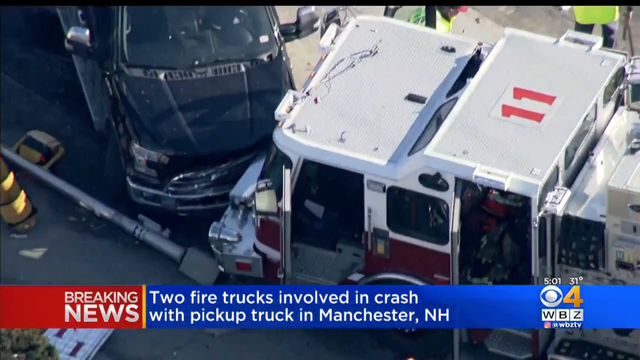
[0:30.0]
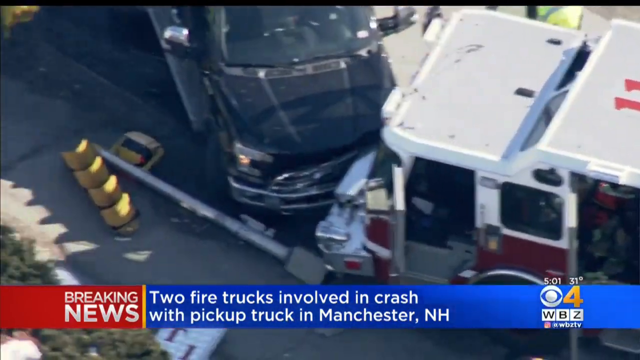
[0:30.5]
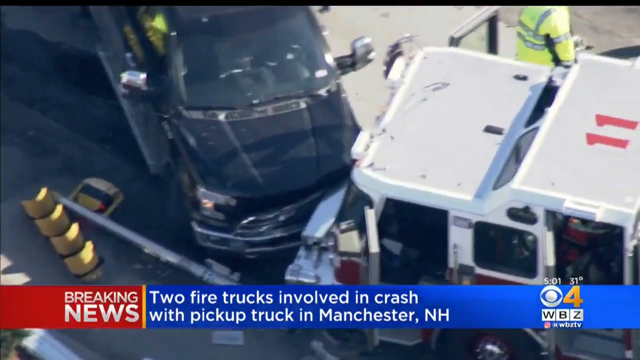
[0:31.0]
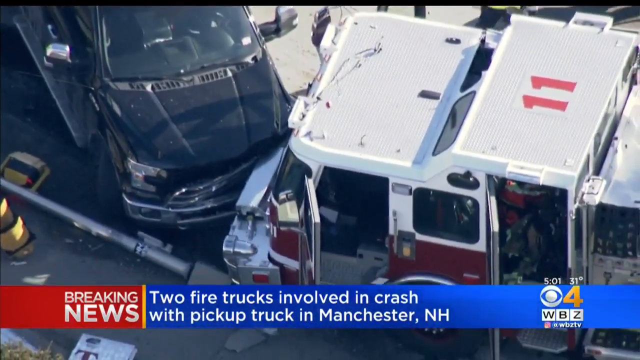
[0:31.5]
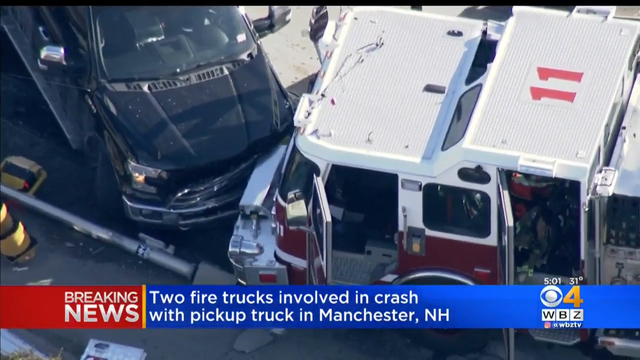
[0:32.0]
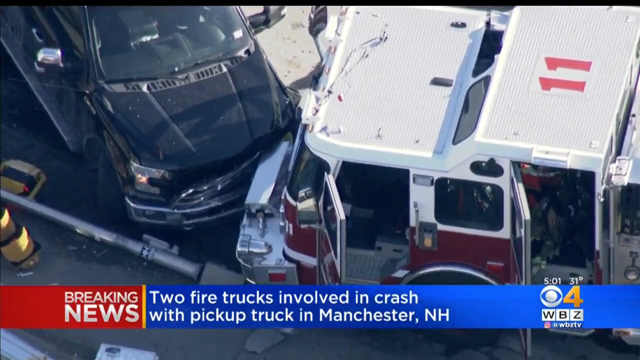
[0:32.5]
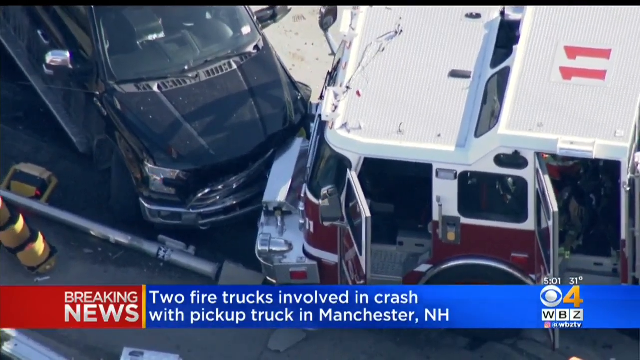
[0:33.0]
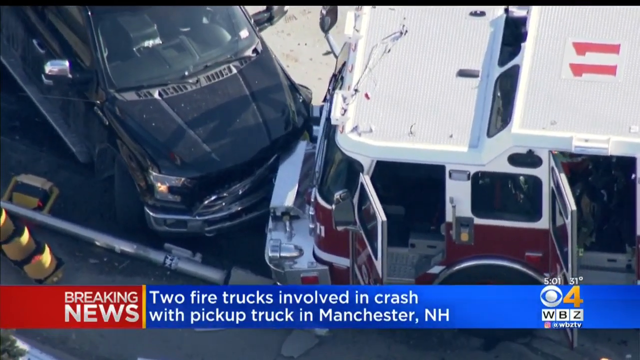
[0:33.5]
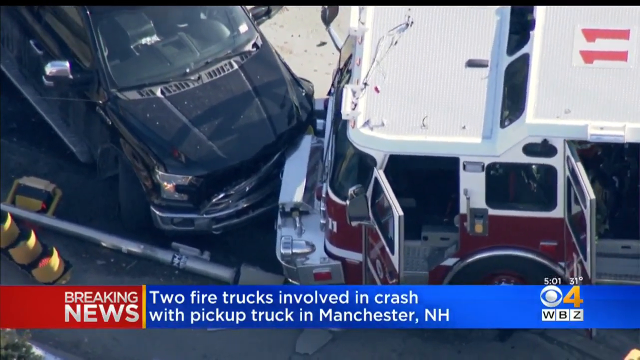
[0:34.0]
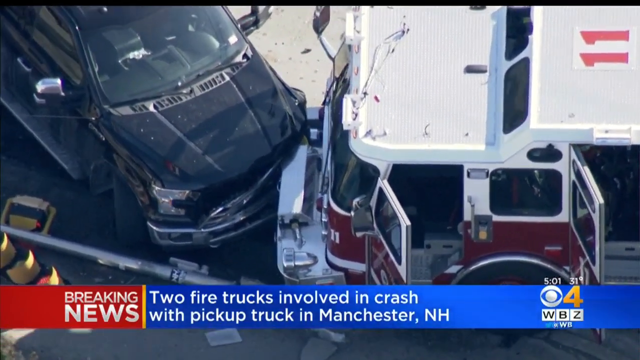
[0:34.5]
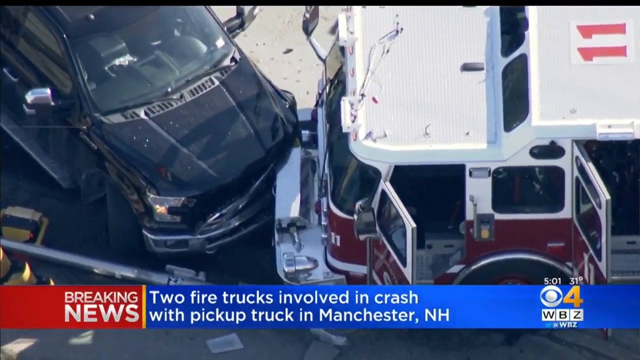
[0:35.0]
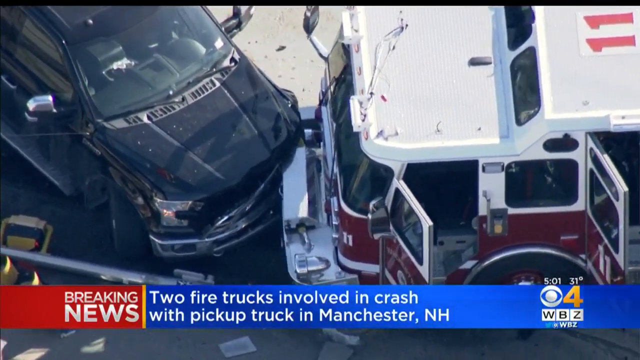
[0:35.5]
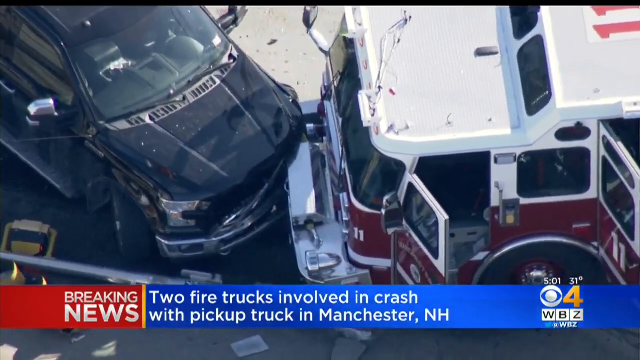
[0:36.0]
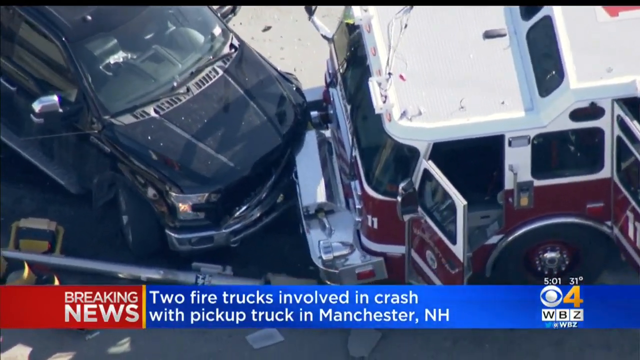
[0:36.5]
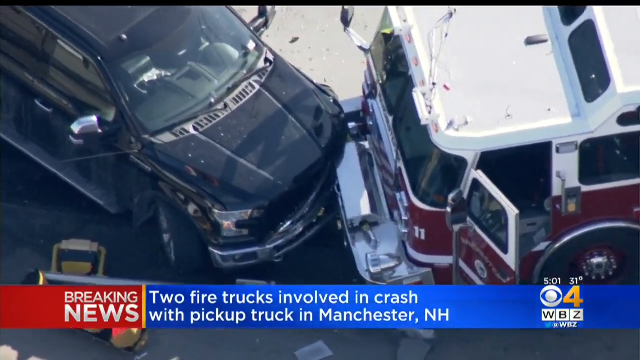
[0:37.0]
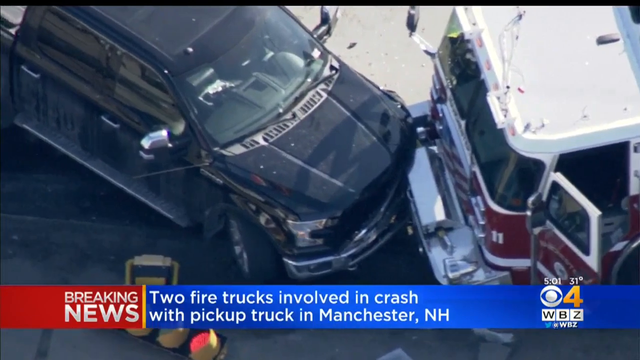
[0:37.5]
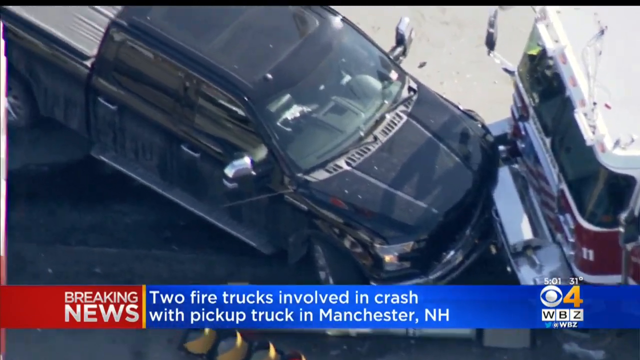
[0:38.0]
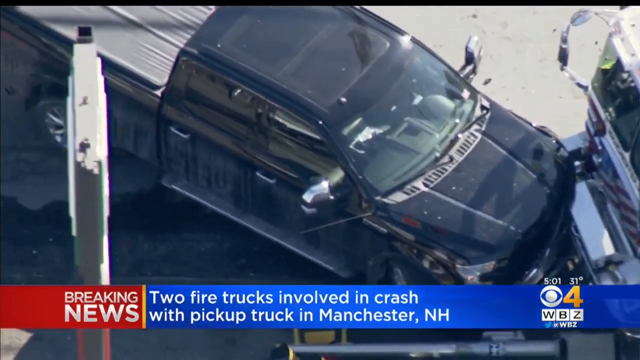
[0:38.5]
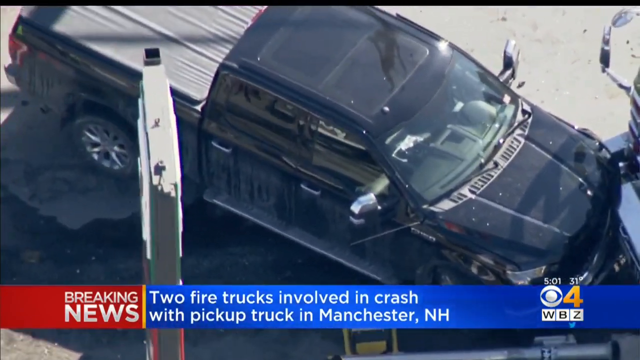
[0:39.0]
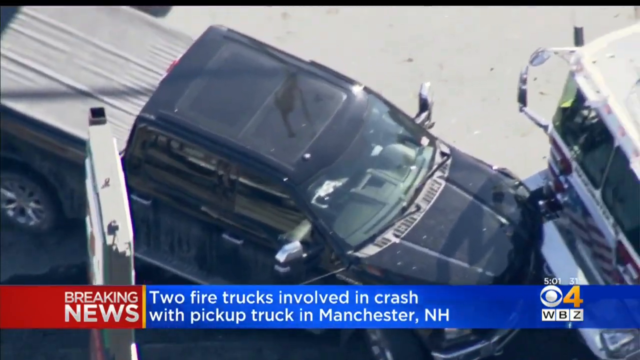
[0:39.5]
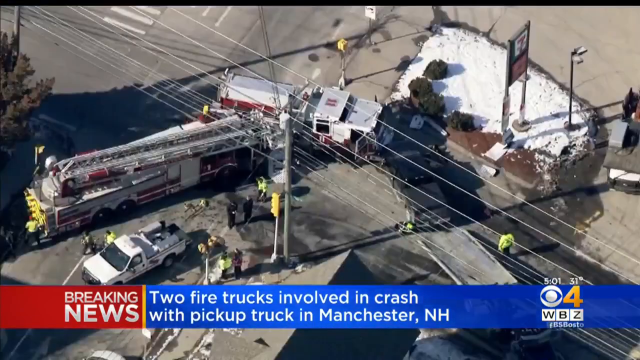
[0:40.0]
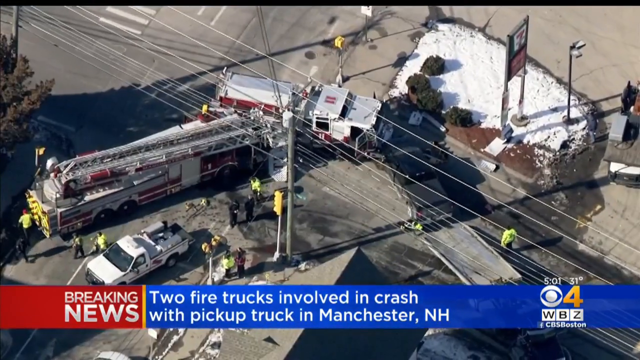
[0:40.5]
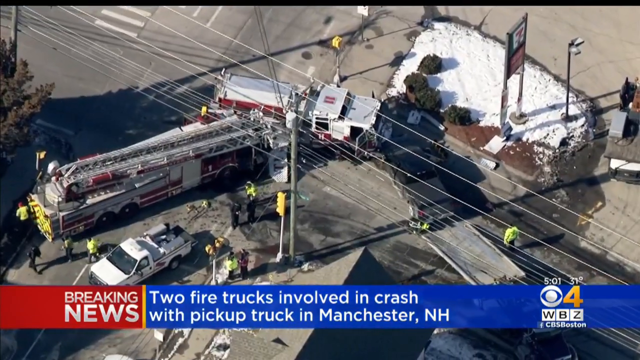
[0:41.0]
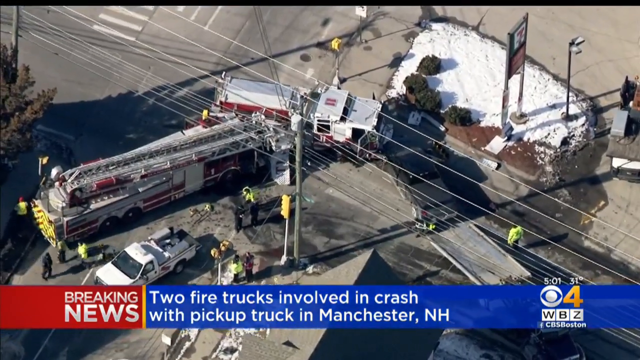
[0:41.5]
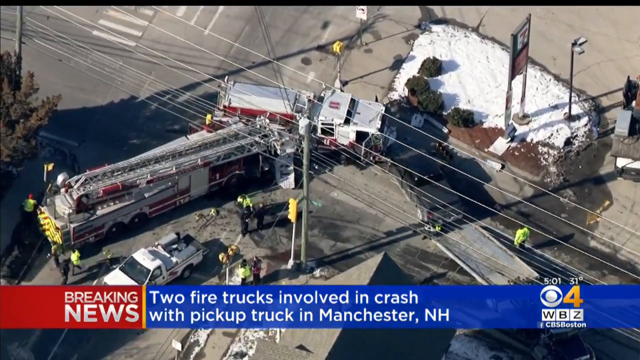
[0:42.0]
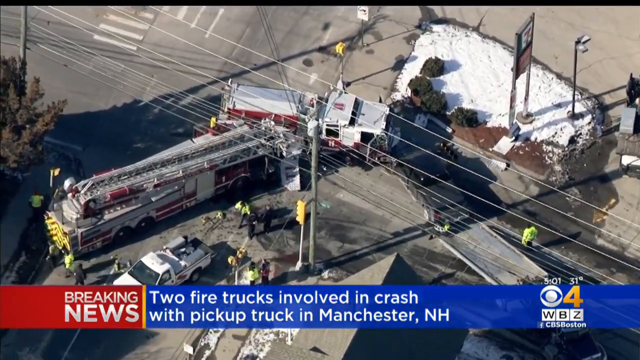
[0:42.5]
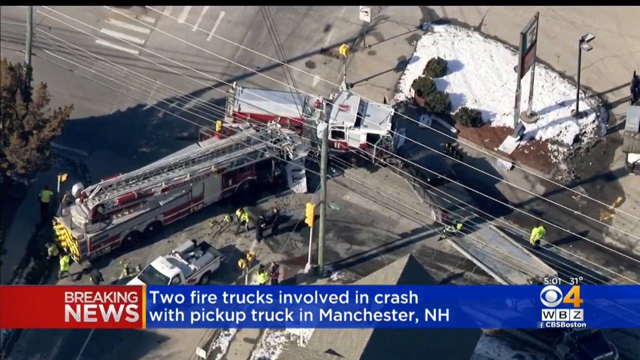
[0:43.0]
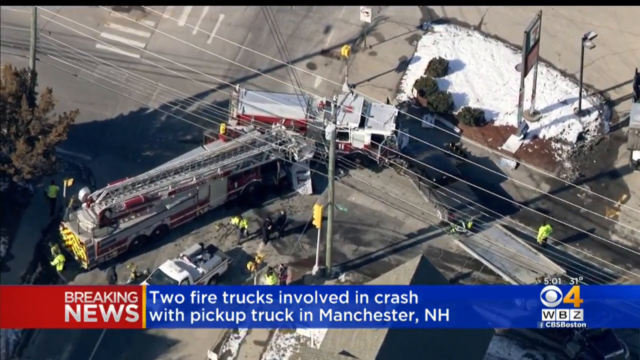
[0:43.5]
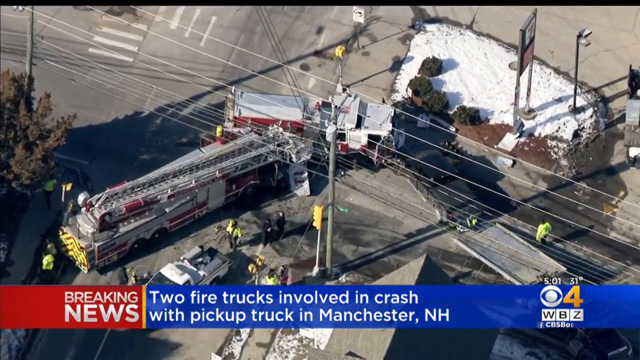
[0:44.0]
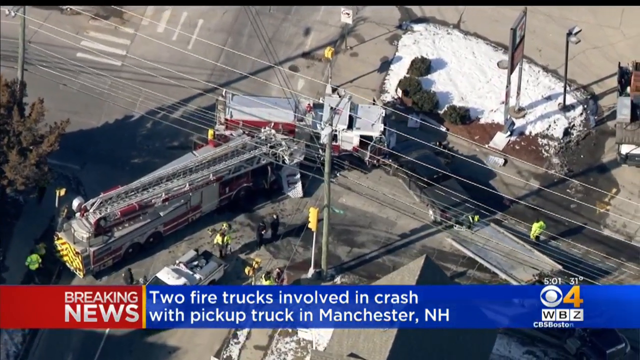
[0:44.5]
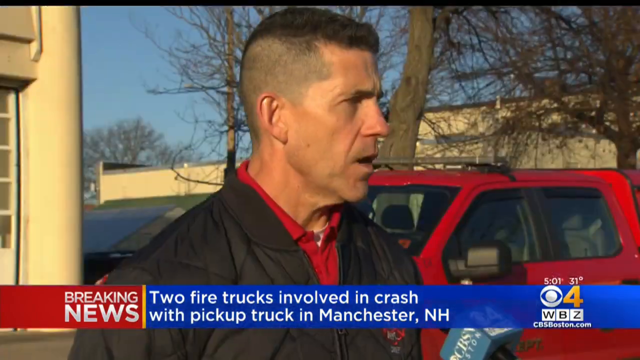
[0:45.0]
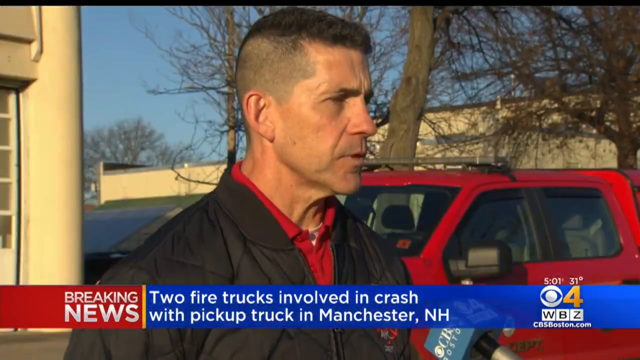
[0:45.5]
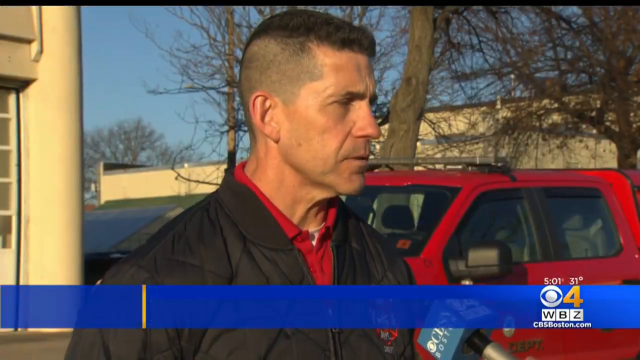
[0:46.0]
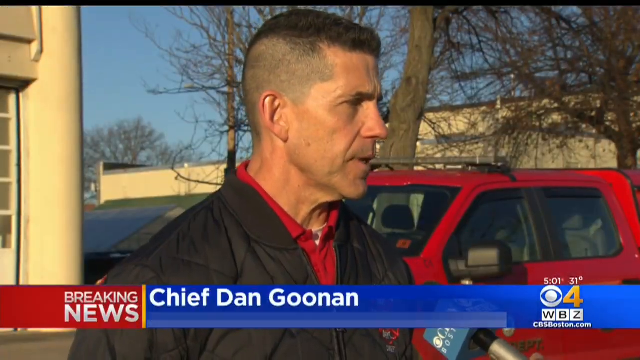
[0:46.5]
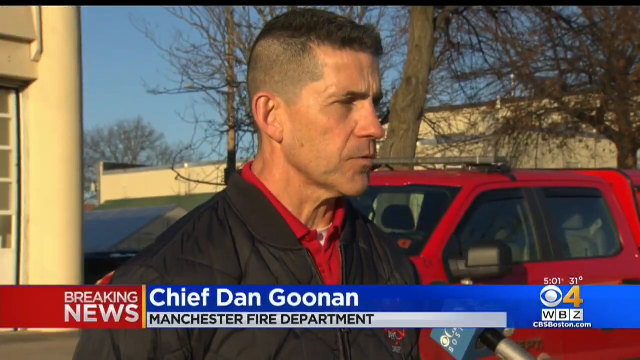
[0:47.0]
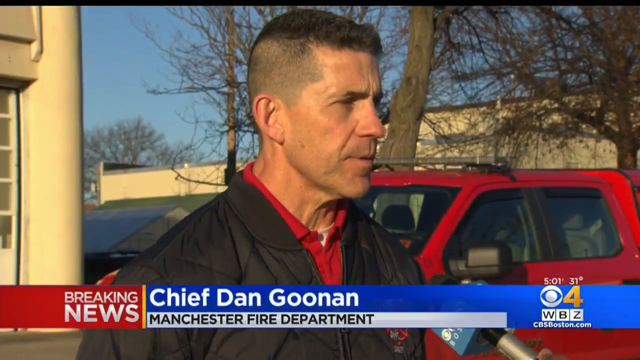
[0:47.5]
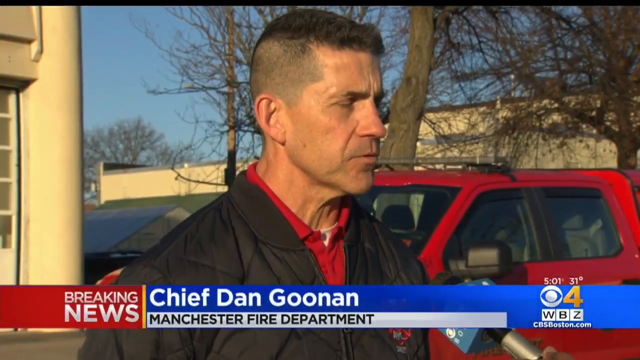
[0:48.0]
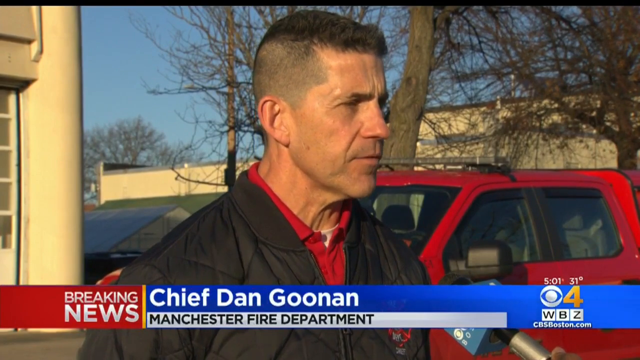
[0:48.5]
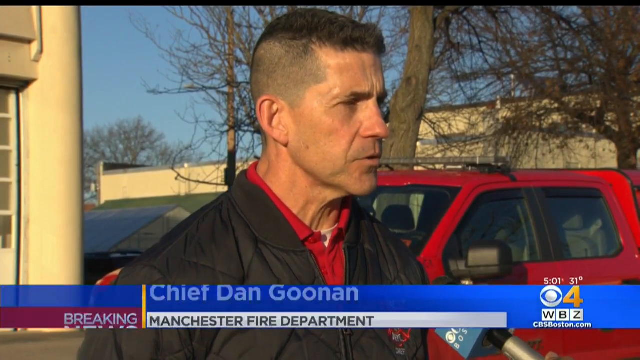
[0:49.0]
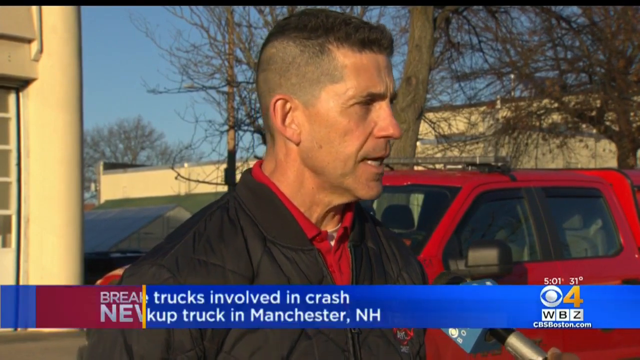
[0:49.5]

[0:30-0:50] A close-up shows the fire truck that hit the black truck basically head-on. A street post, possibly a walk sign for a crosswalk, has also been knocked over. The black truck appears to be pretty much destroyed. From another angle, many power lines are in the foreground, and behind them are the fire truck and the other fire truck. The second fire truck, the larger one behind, hit the first fire truck on the side. Lots of people are walking around. The shot cuts to a white man who looks middle-aged, with kind of a military haircut, wearing a black jacket and a red collared shirt with what looks like a white shirt underneath. A red truck, some trees, and a building over to his left are behind him. On-screen text identifies him as "Chief Dan Goonan" of the "Manchester Fire Department", and he is talking about the two fire trucks involved in the crash.